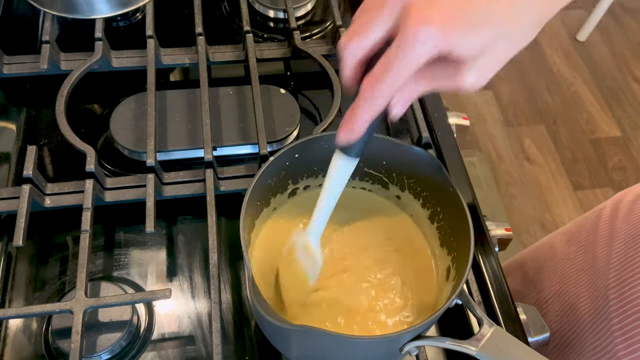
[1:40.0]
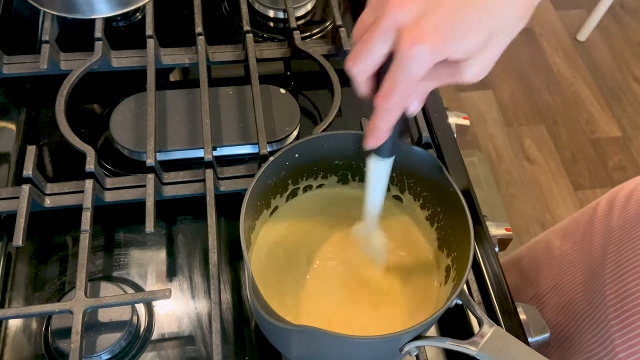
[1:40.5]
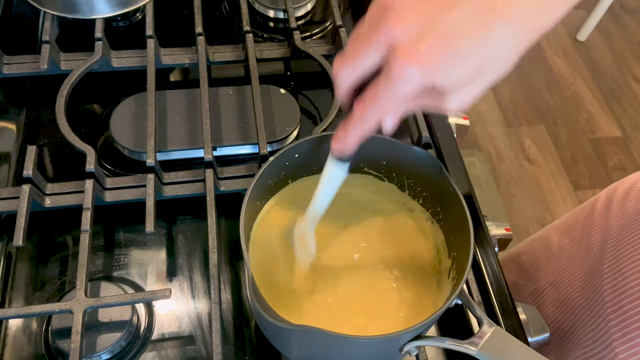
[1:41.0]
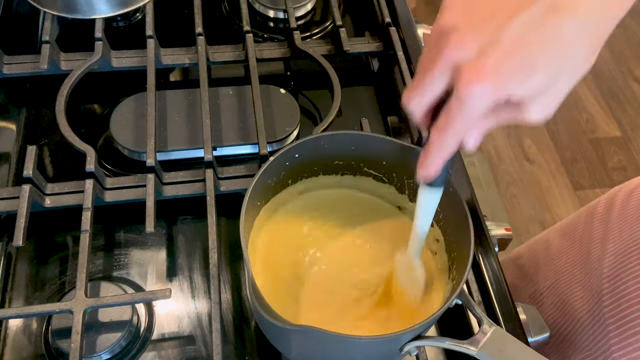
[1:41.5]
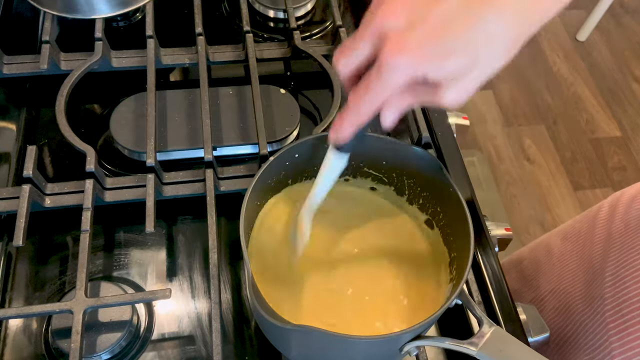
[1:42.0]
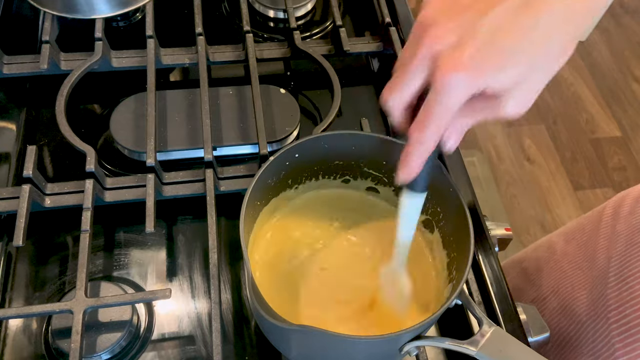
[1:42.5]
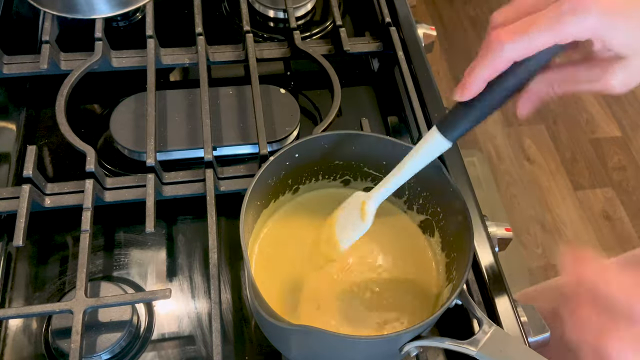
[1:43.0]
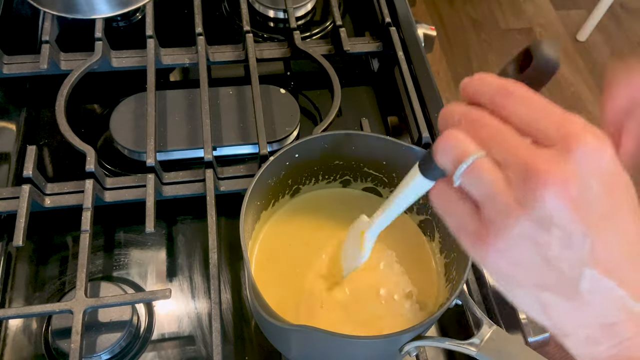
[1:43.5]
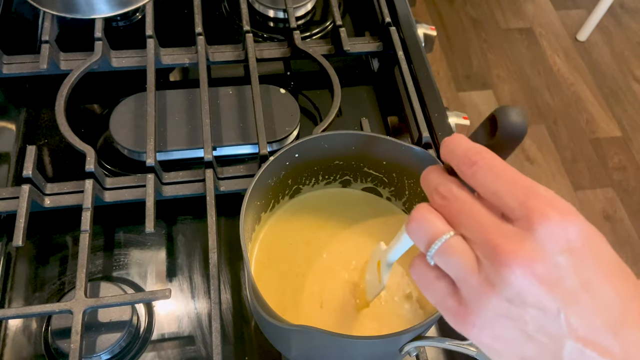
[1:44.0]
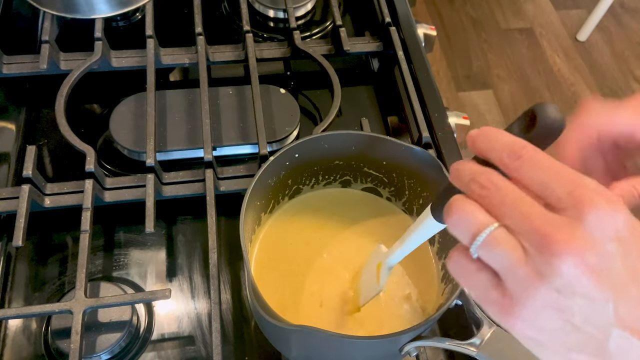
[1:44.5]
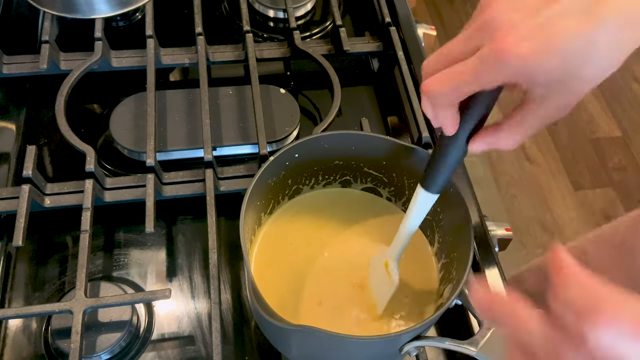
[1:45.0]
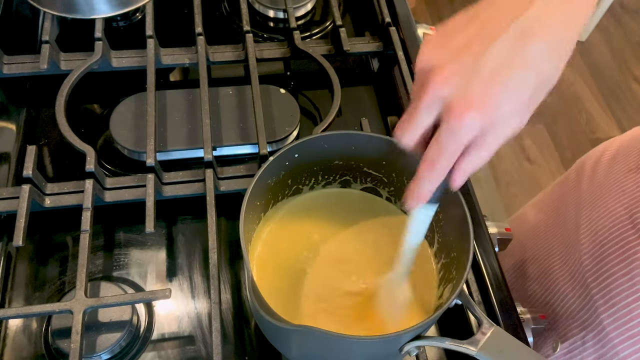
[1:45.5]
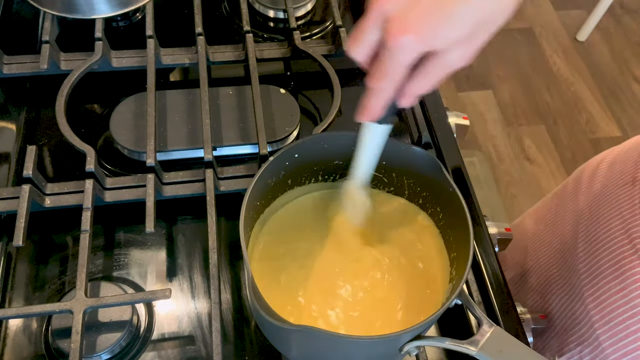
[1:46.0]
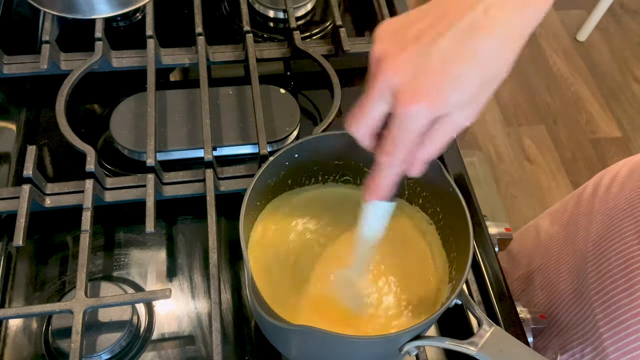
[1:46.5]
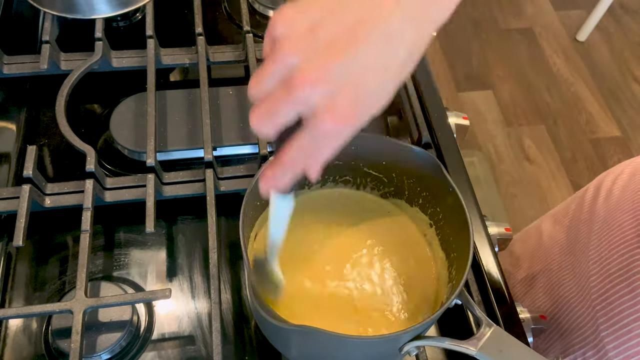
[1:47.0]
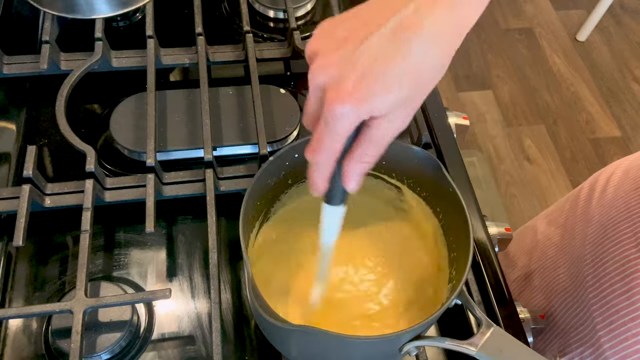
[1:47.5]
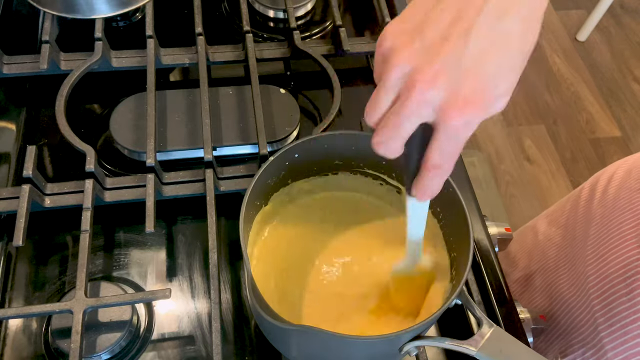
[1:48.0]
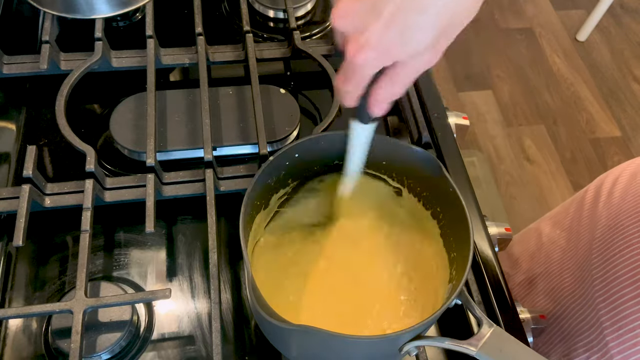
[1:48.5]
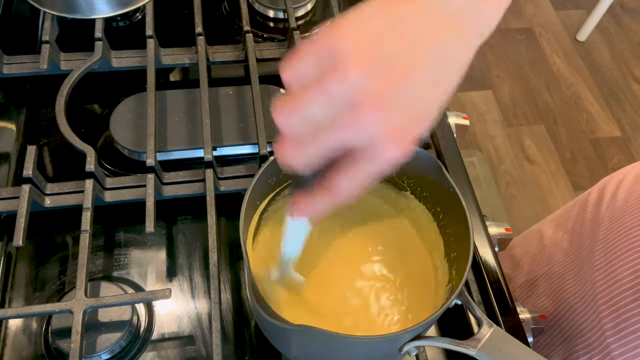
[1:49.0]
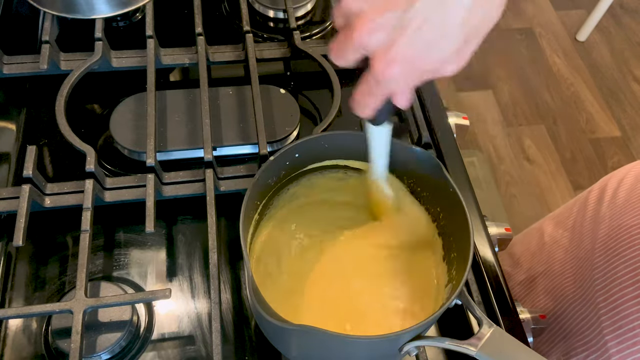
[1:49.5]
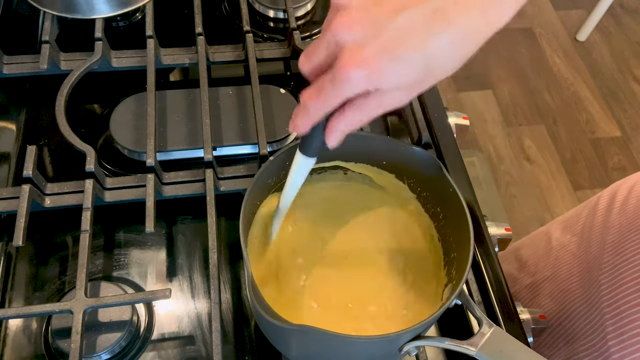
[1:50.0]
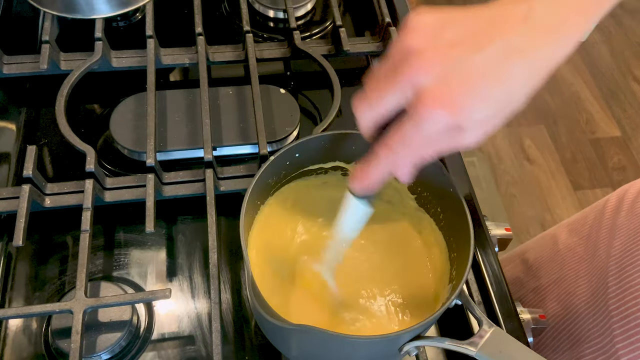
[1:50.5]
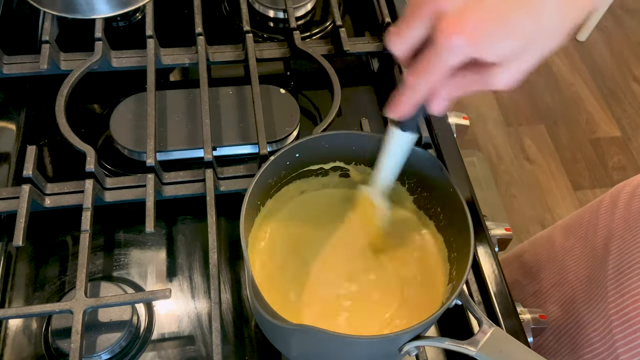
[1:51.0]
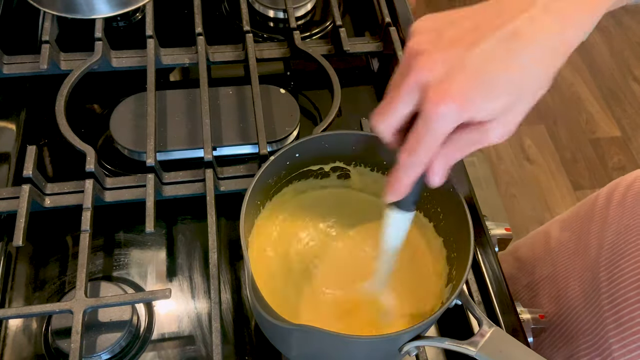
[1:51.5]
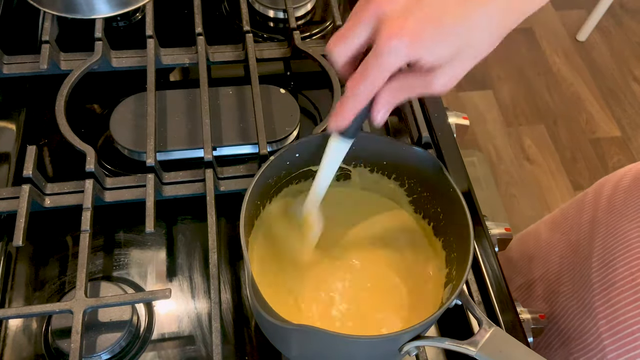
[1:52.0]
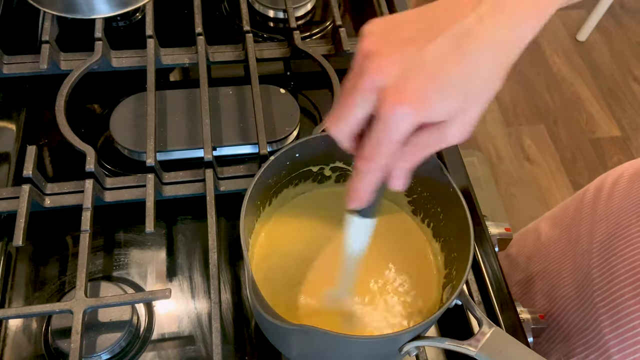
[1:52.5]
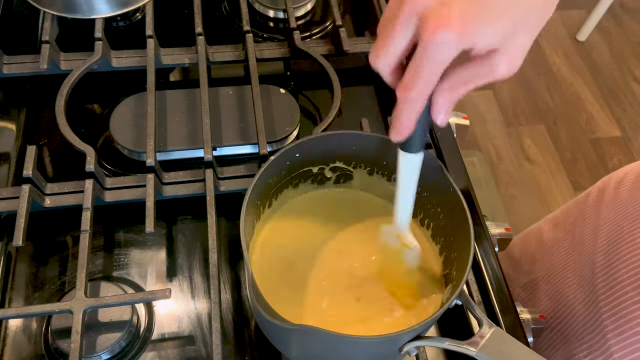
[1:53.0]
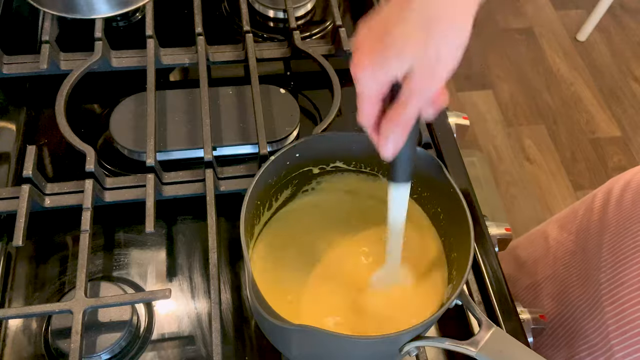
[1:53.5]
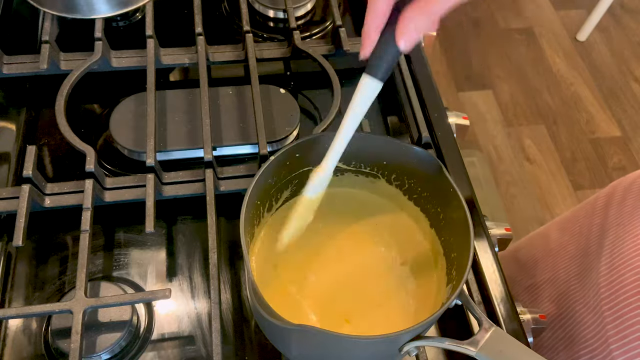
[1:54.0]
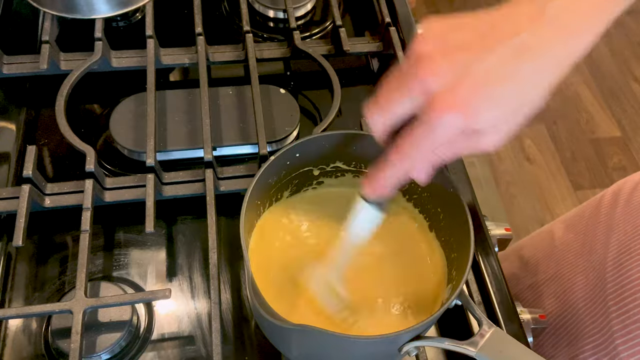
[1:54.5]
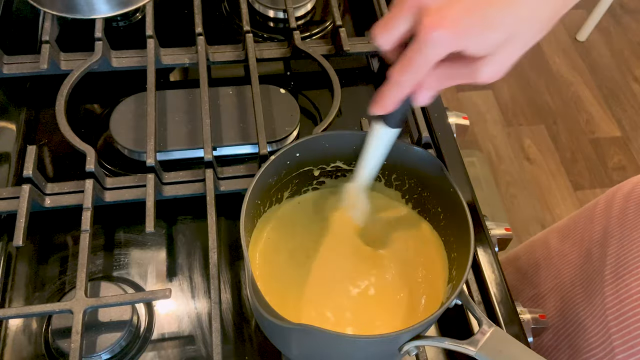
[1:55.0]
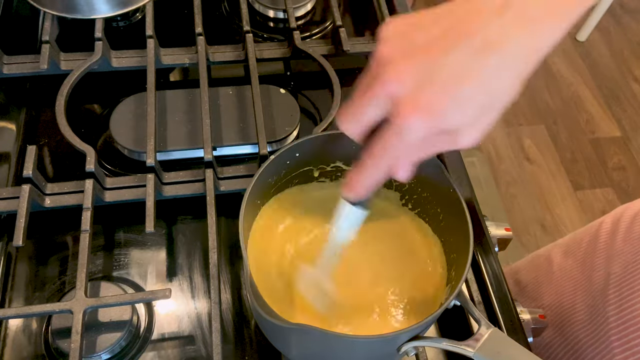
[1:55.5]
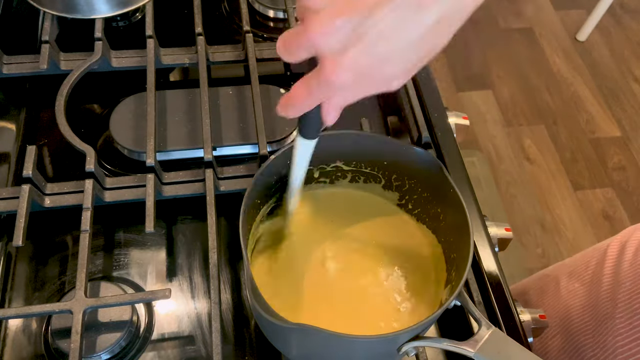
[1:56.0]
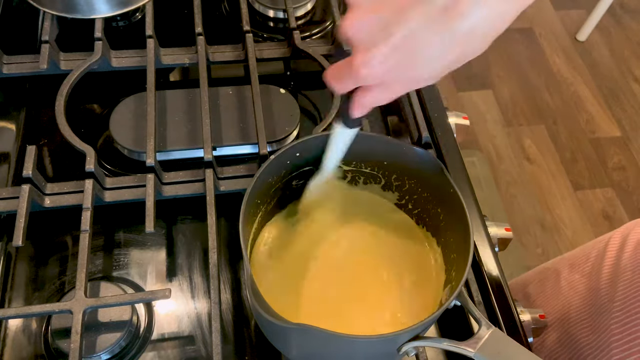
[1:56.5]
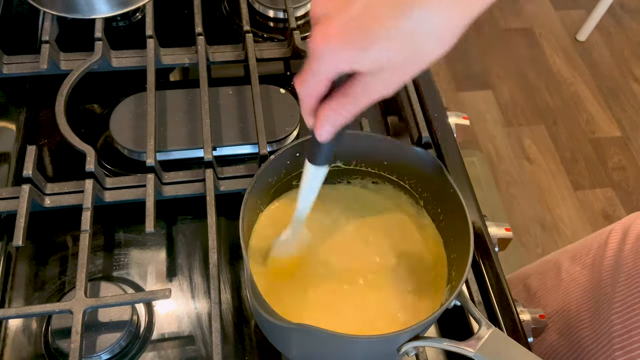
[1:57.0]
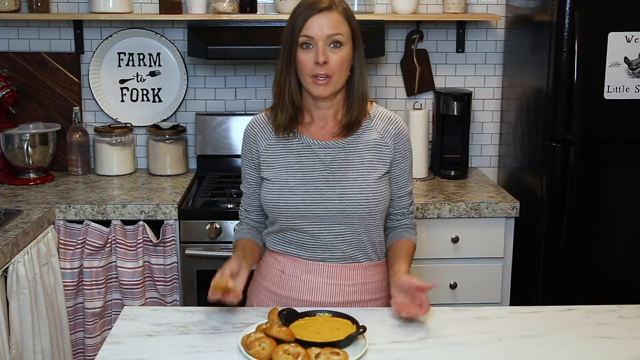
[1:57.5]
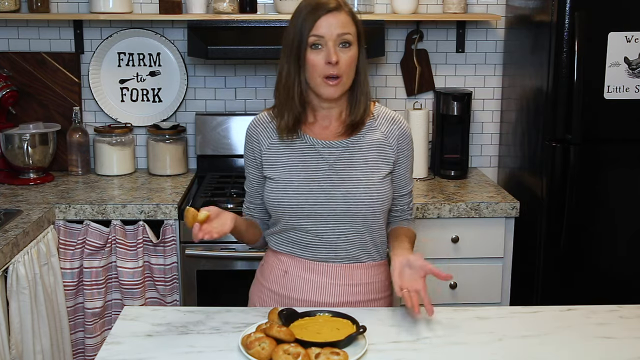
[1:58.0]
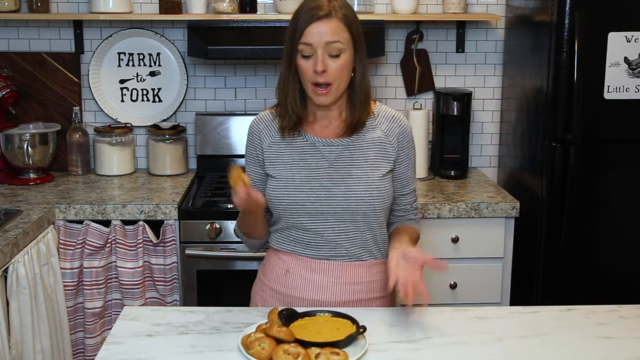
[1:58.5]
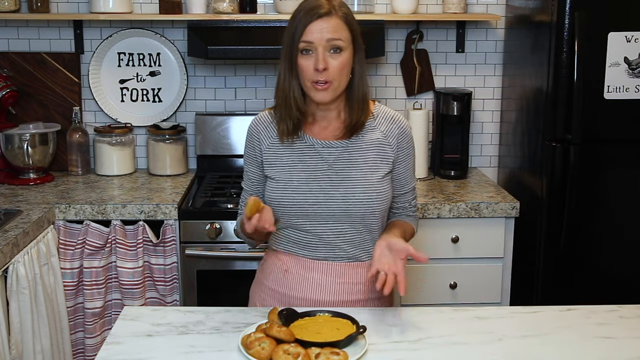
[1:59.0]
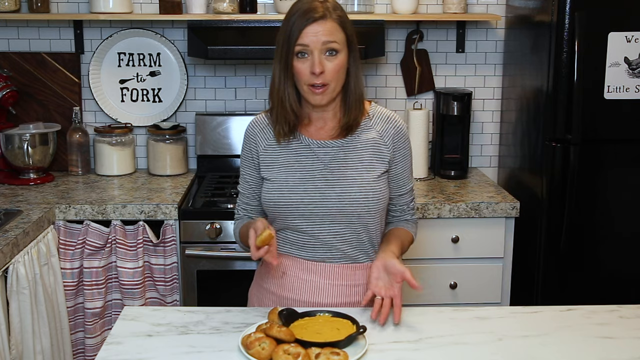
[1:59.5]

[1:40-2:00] The mix is coming together. She keeps stirring the pot and does not leave the stove. She apparently tastes the mix to check the flavor.